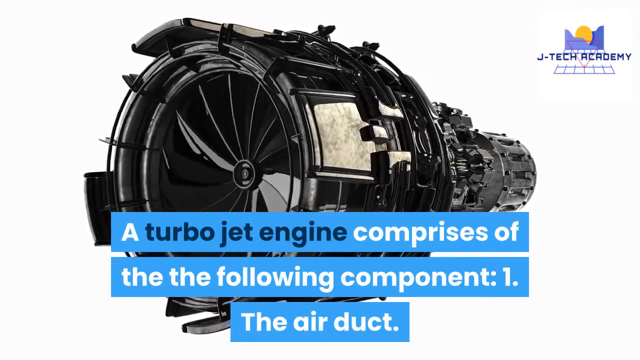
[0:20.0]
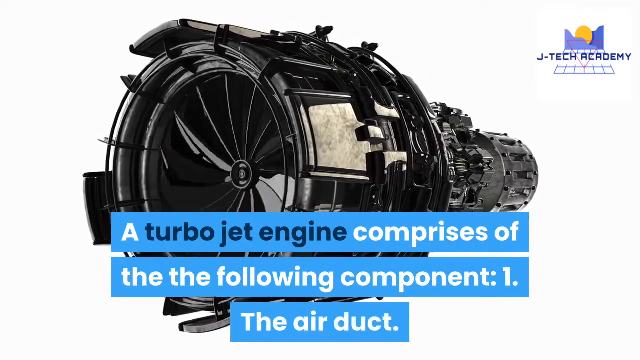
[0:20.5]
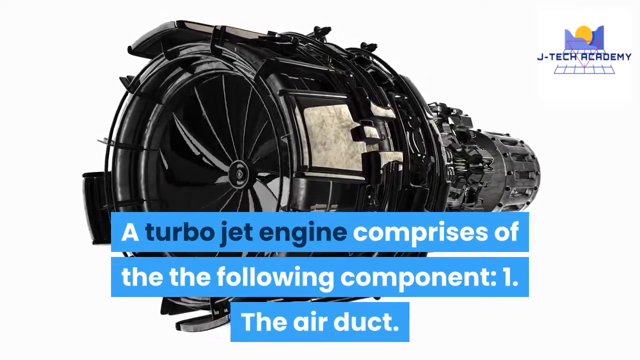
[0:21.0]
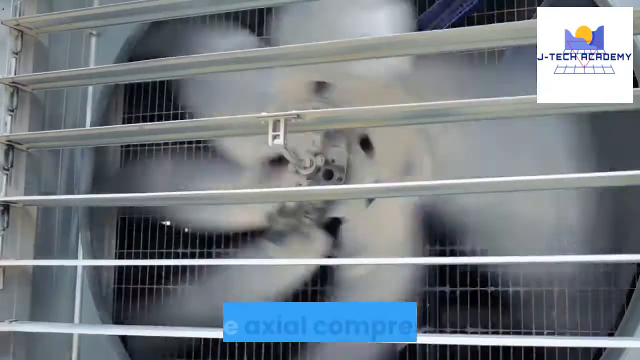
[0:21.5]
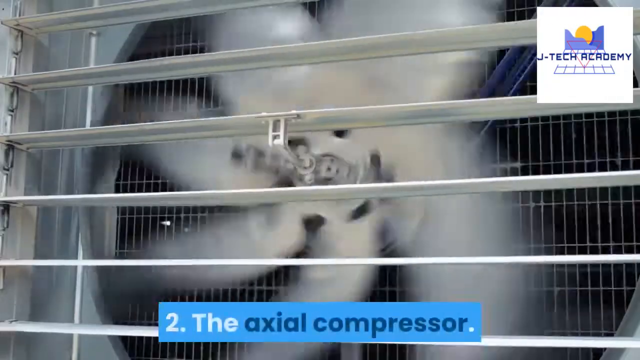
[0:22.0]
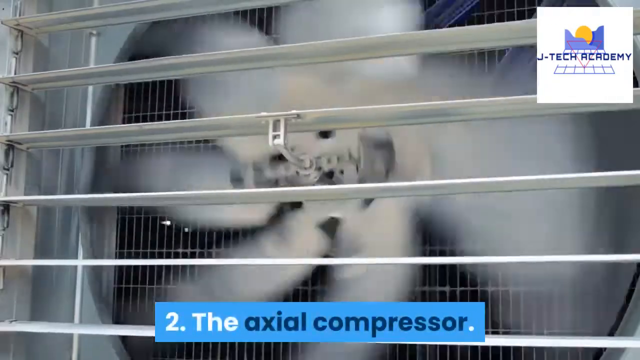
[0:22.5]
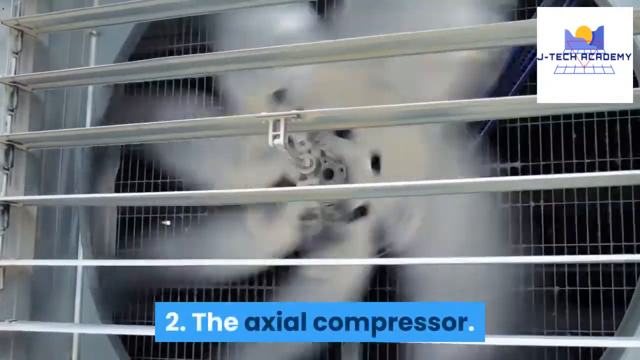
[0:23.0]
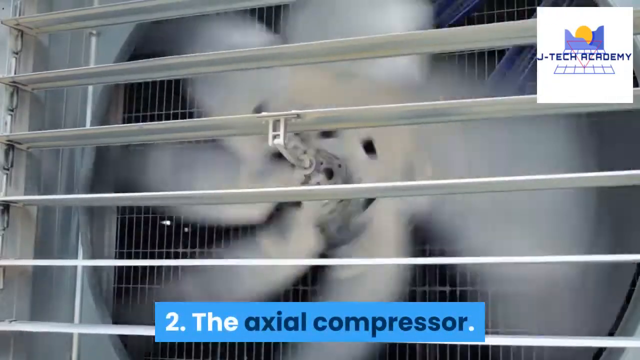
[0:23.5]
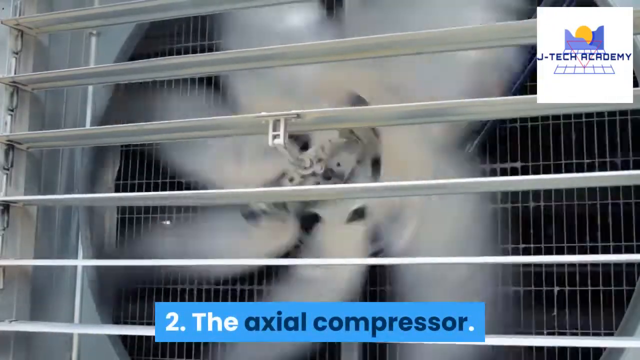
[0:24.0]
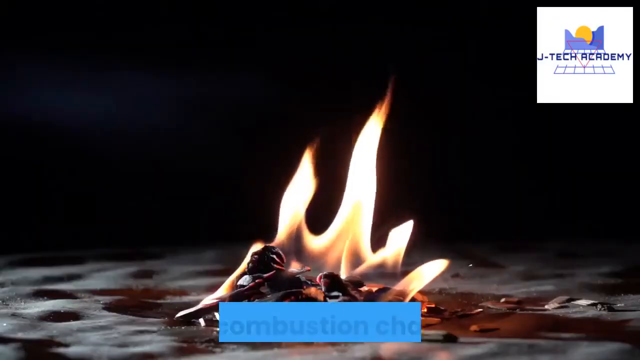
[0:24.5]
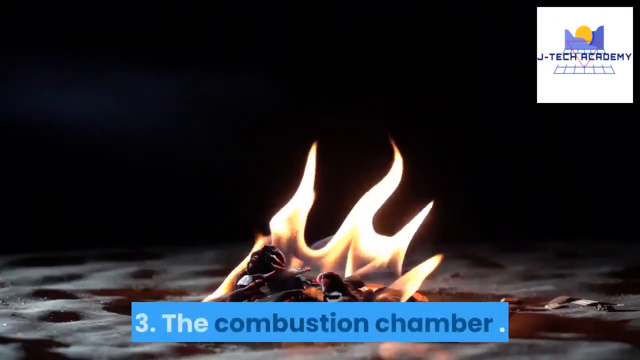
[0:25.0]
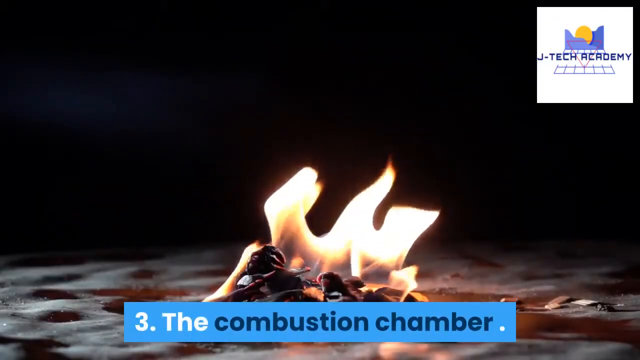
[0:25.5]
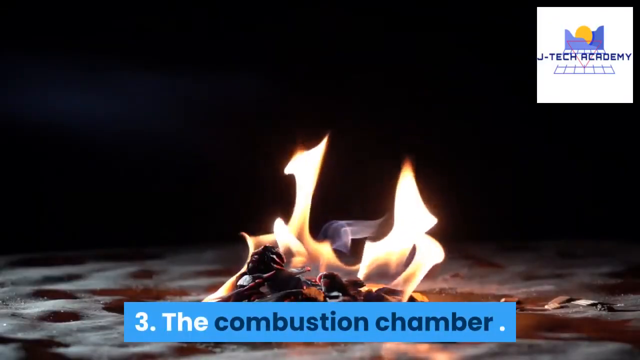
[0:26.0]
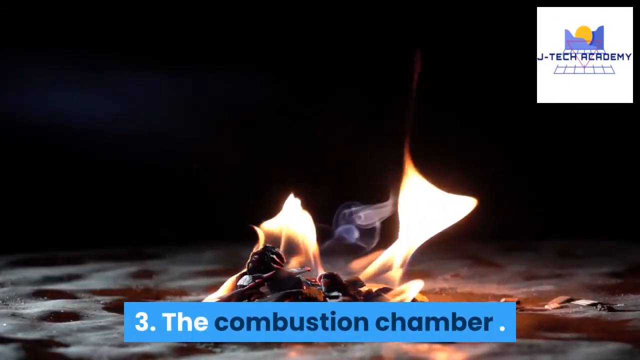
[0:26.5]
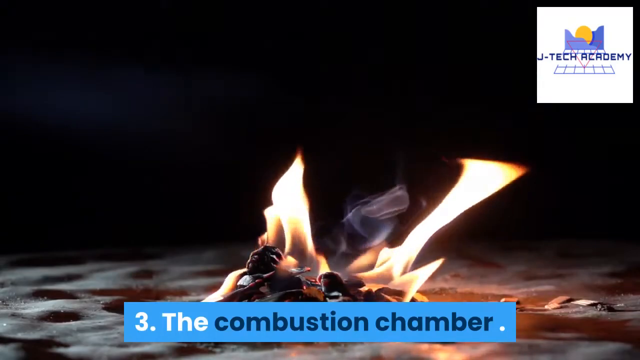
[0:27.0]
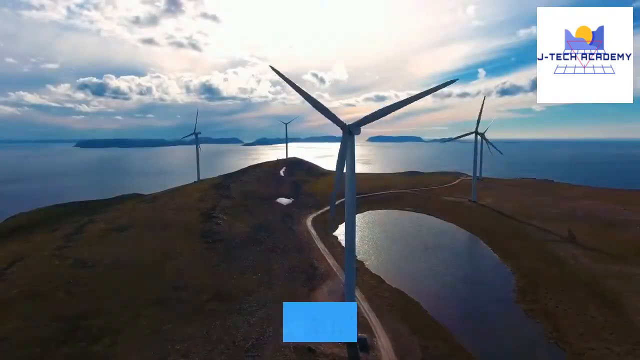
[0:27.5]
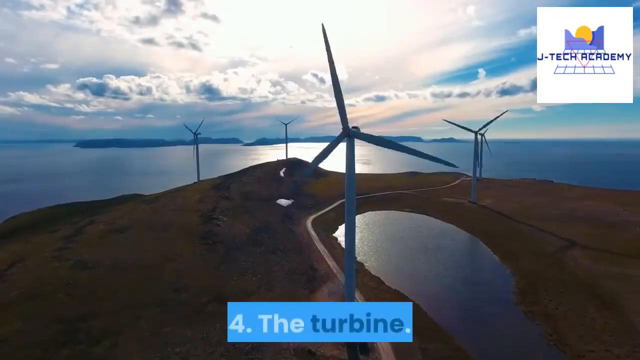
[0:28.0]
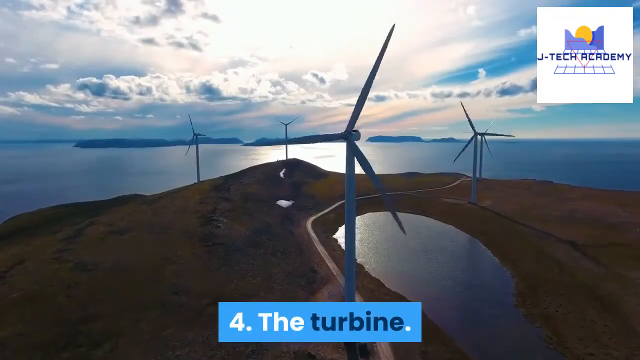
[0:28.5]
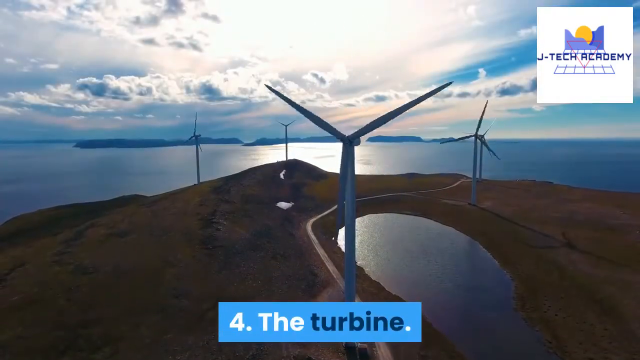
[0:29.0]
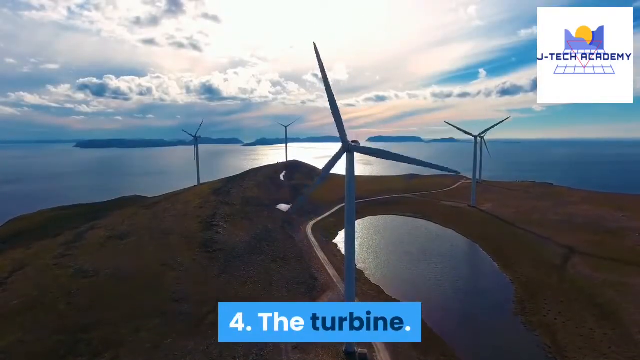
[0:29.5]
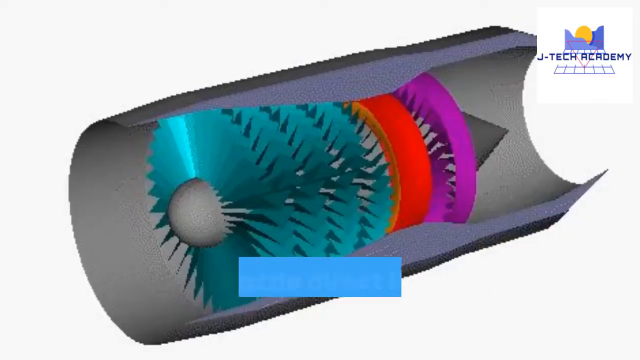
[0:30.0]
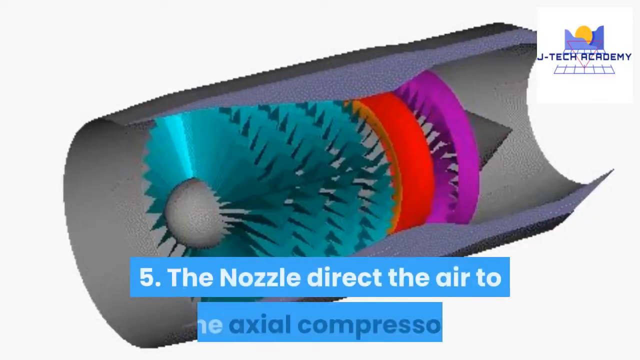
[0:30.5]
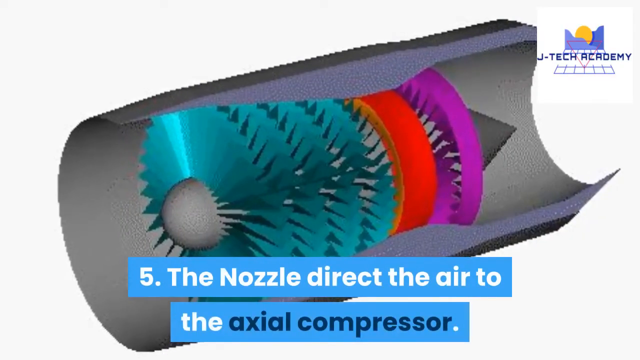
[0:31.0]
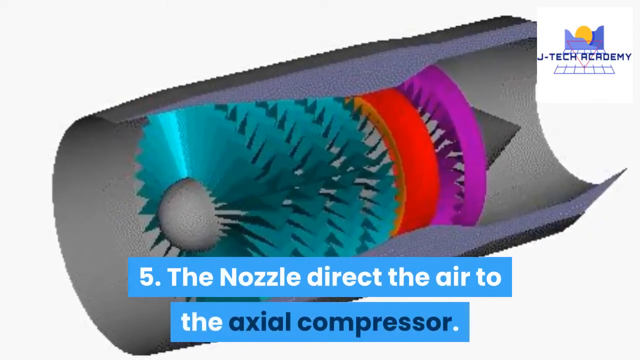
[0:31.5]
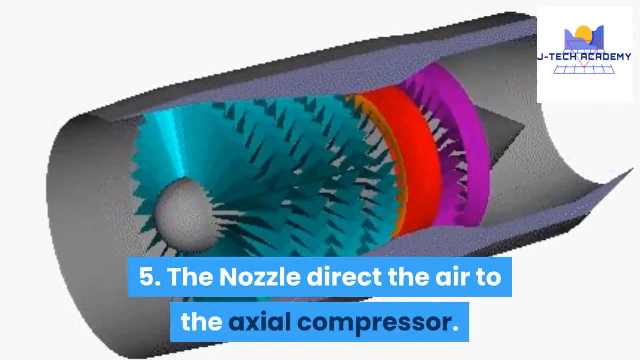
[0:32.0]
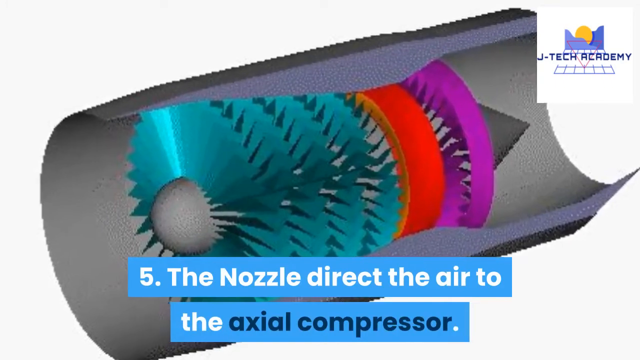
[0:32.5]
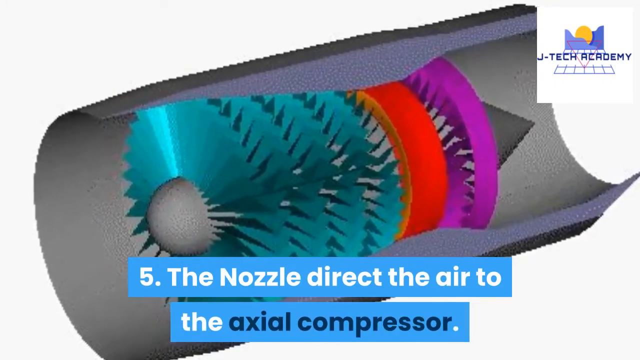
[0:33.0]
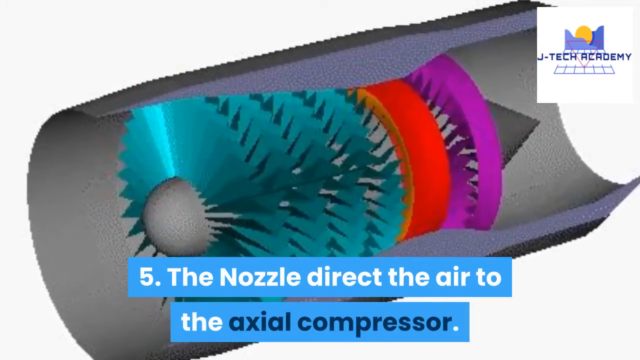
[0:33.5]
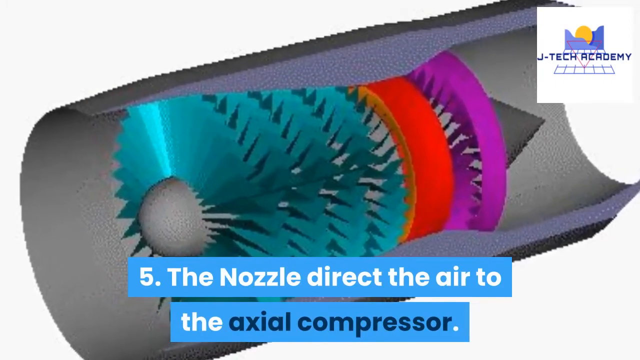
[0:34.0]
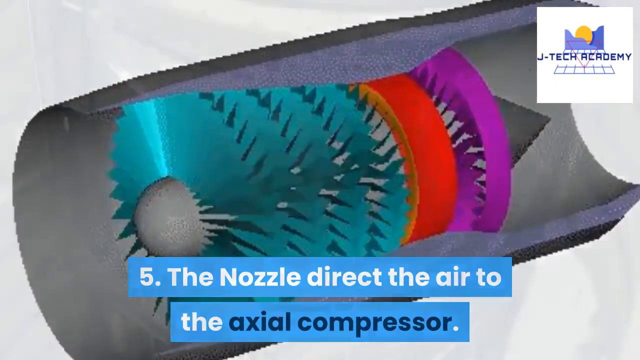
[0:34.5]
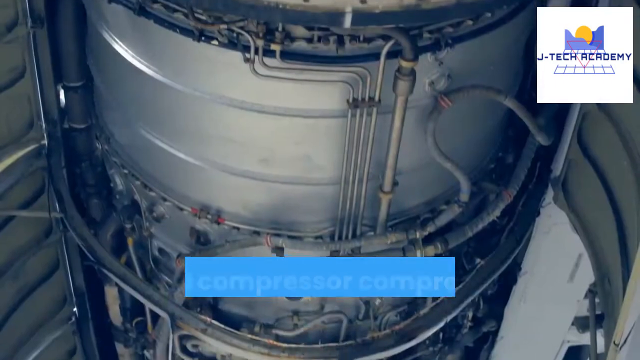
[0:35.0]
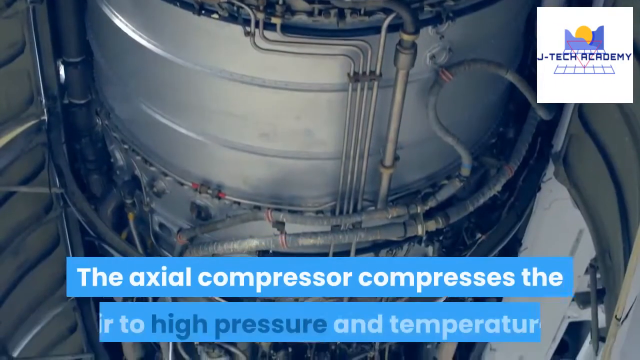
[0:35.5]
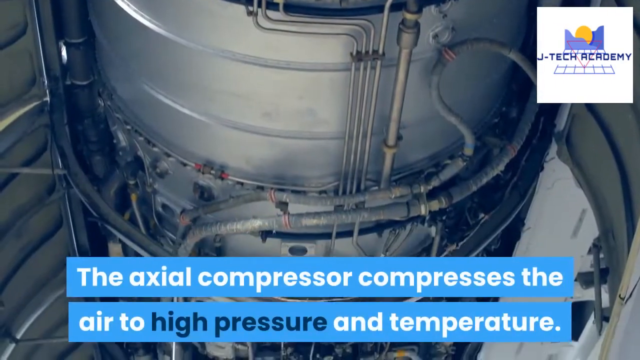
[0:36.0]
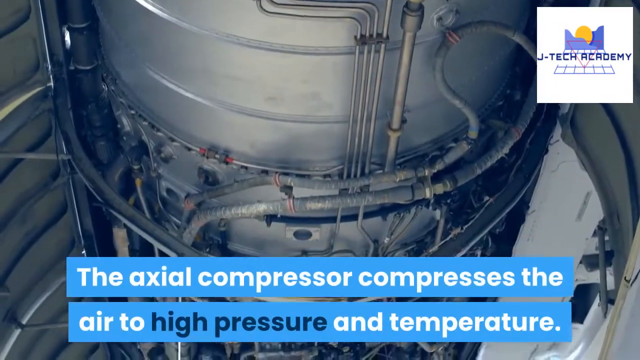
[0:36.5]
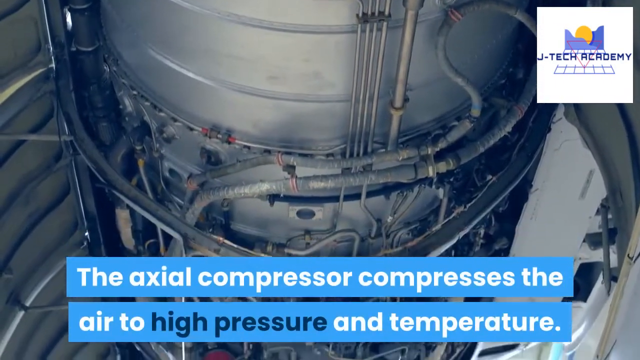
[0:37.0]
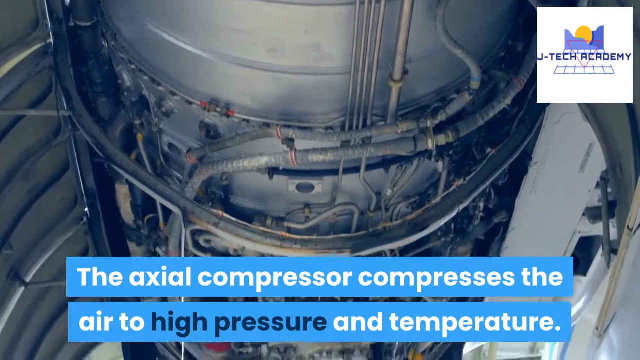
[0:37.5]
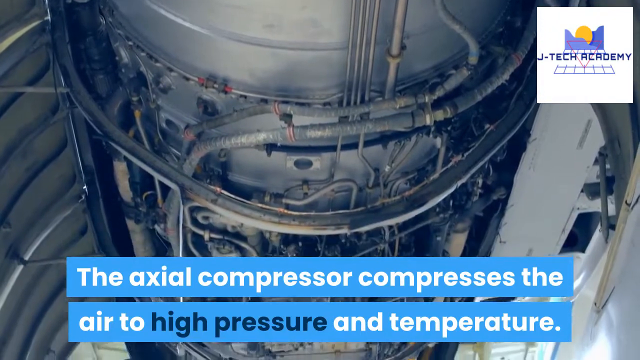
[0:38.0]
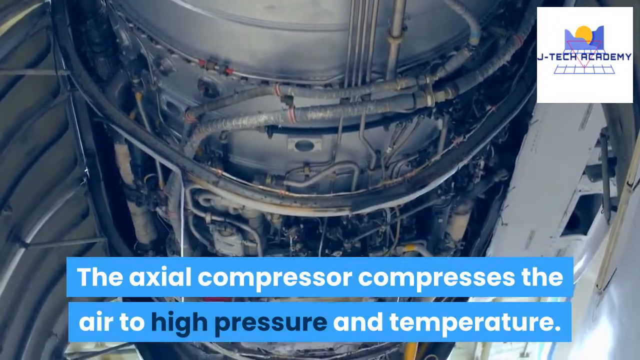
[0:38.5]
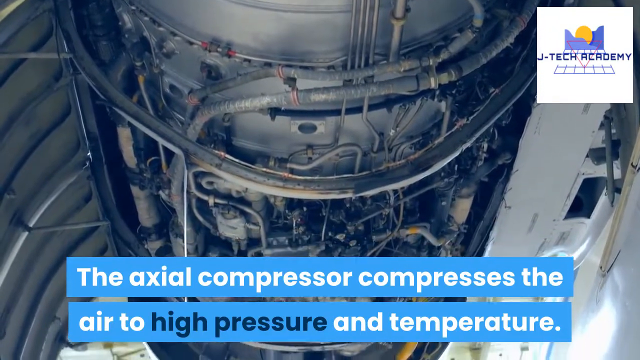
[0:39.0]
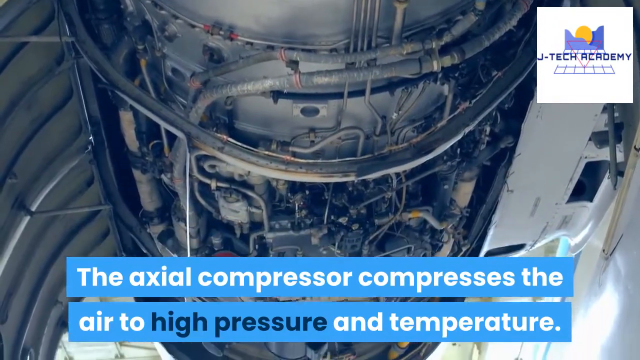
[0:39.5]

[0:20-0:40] An animation of an engine is shown, then the screen changes to a close-up of the fan element, with text at the bottom reading "number two the axial compressor." The picture changes to a very dark scene of what looks like a brown, almost moon-like surface with a pile of paper in flames, and the text at the bottom reads "three the combustion chamber." The view then changes to the edge of an island, where the sea is visible and four wind turbines are placed on the edge of the island; the text at the bottom reads "number four the turbine." Next comes an animated cutaway picture of the nozzle, with text at the bottom reading "number five the nozzle directs the air to the axial compressor."